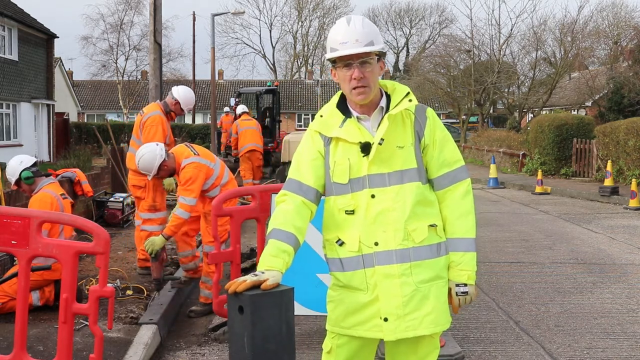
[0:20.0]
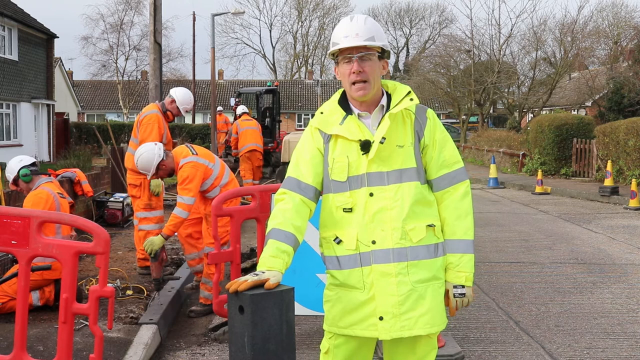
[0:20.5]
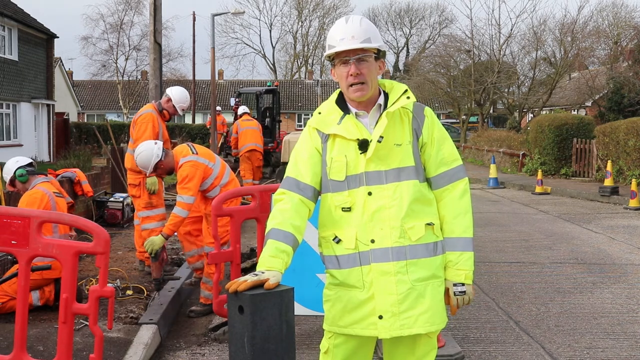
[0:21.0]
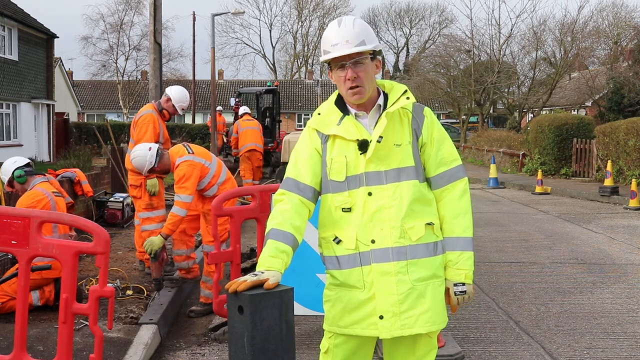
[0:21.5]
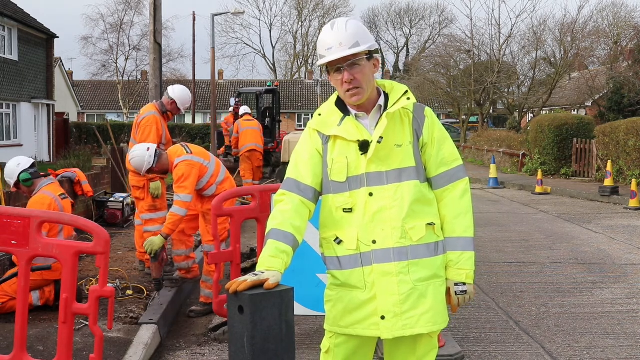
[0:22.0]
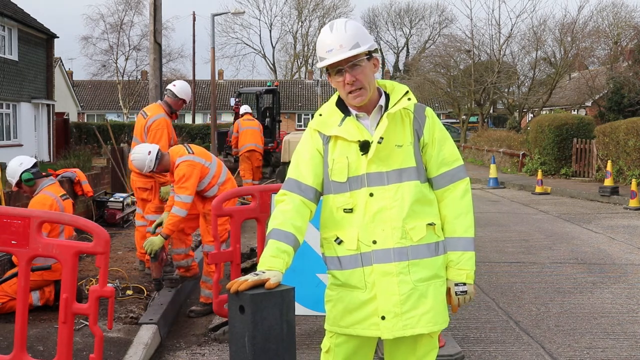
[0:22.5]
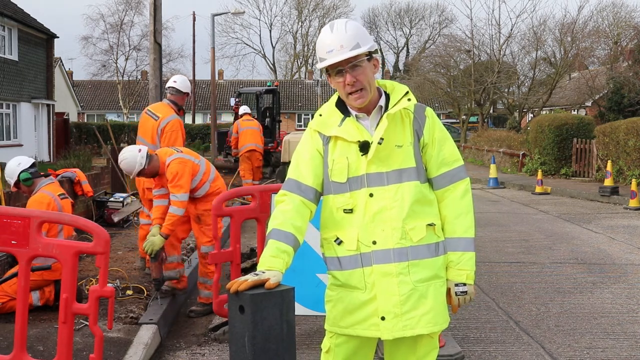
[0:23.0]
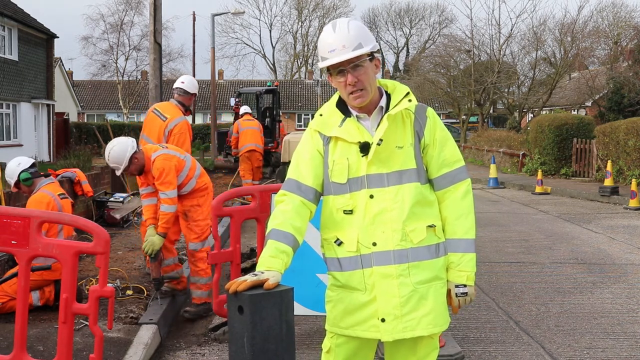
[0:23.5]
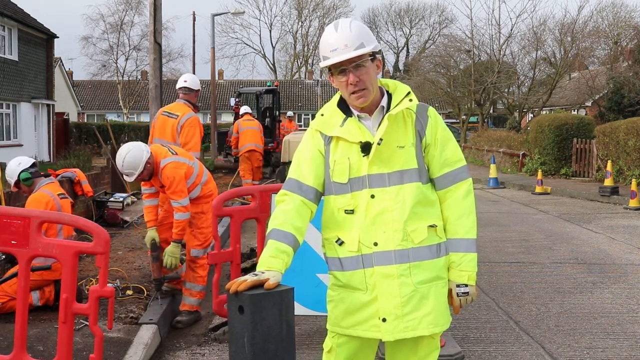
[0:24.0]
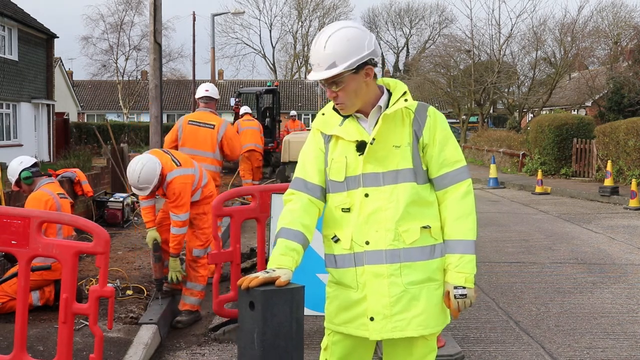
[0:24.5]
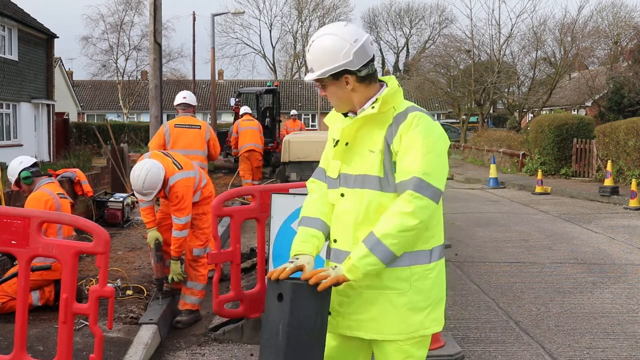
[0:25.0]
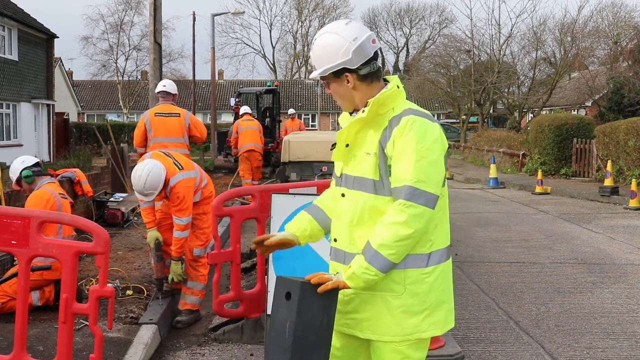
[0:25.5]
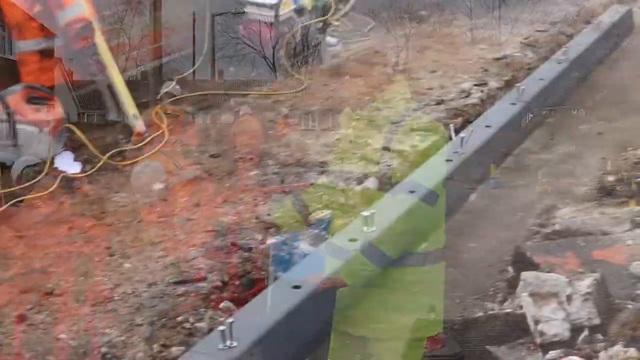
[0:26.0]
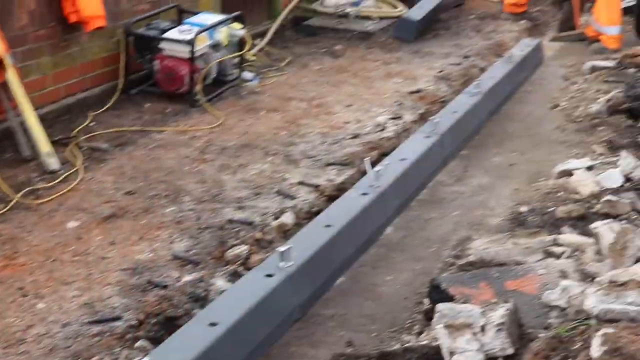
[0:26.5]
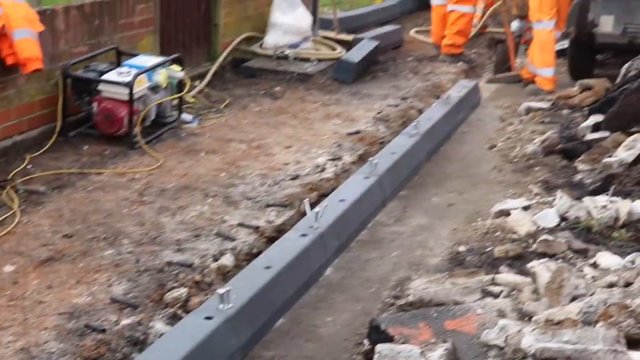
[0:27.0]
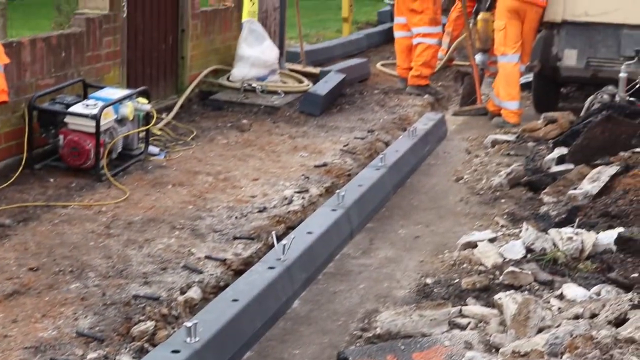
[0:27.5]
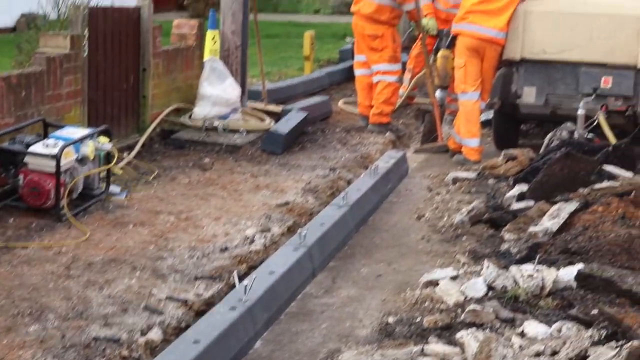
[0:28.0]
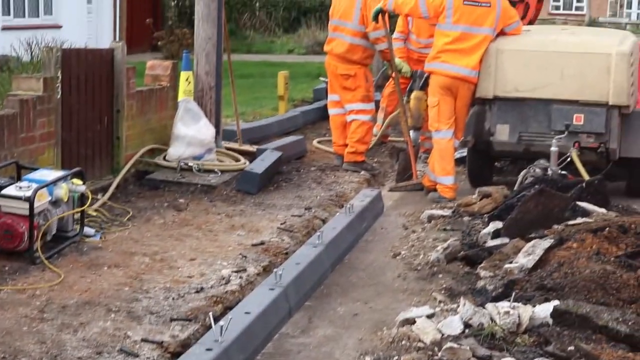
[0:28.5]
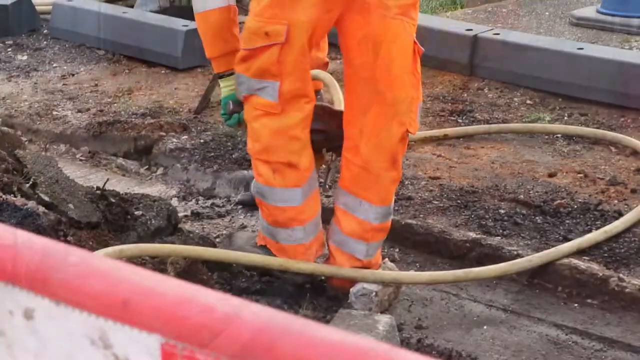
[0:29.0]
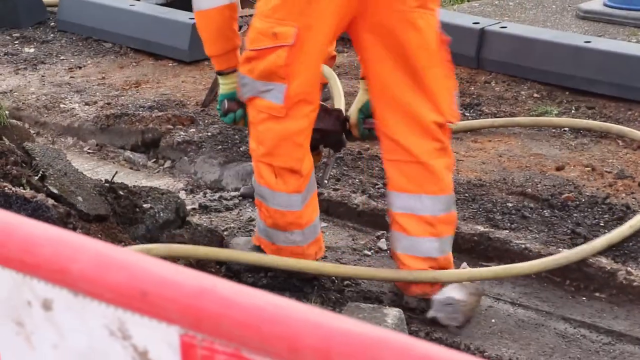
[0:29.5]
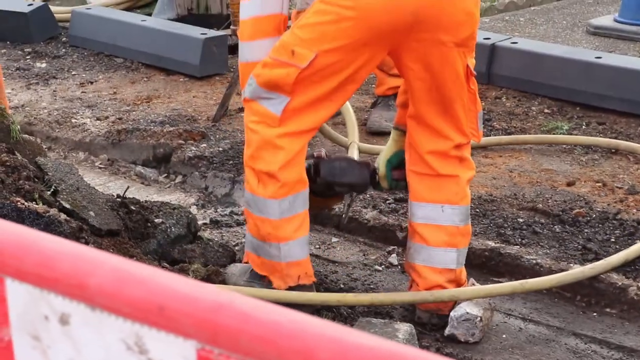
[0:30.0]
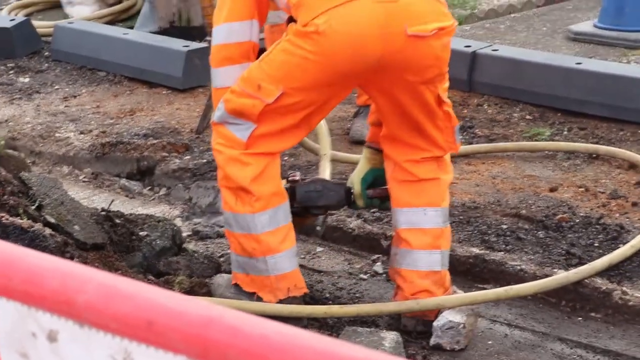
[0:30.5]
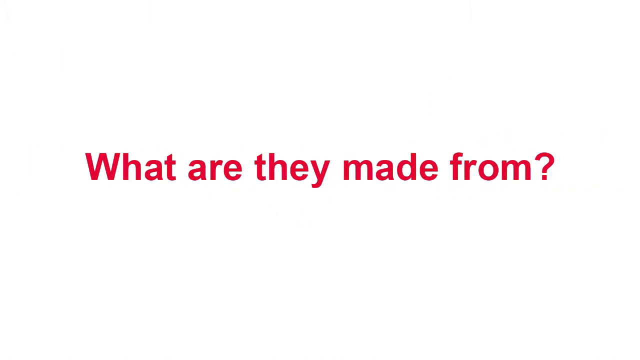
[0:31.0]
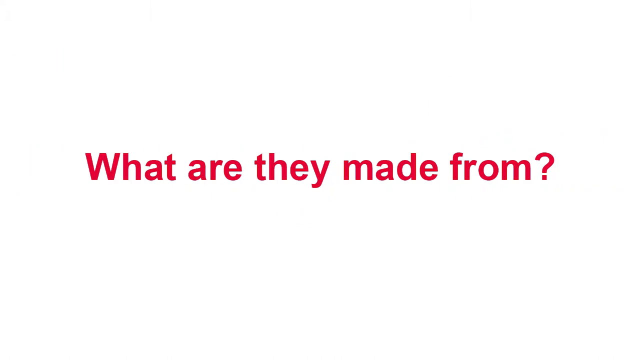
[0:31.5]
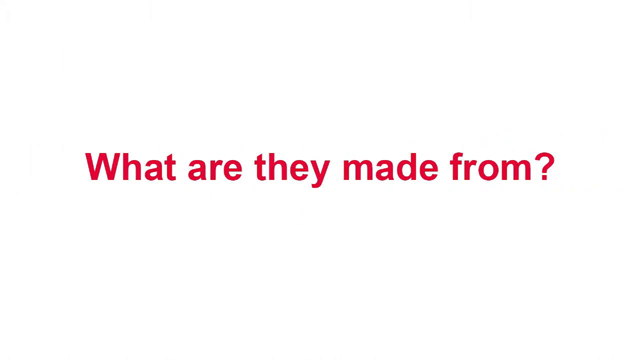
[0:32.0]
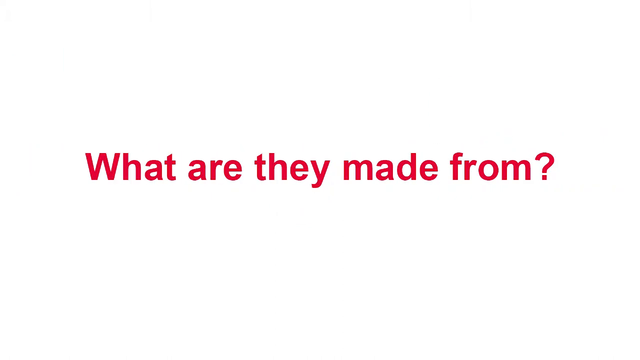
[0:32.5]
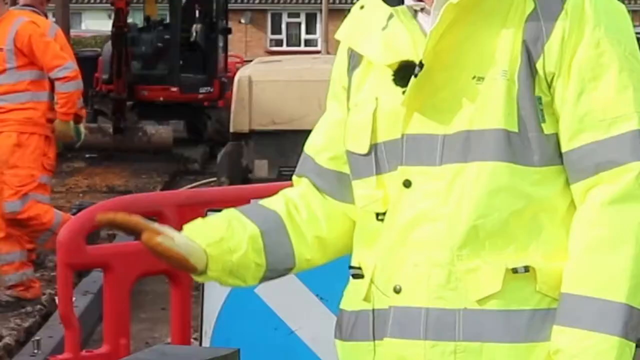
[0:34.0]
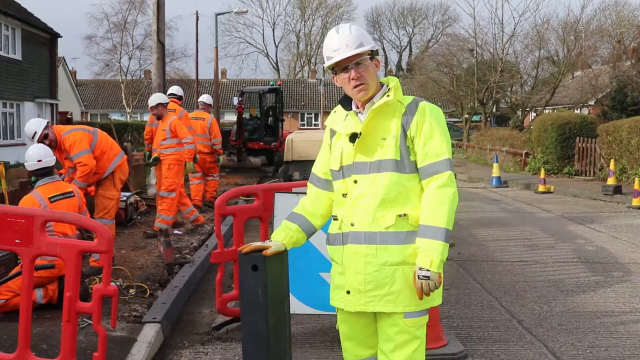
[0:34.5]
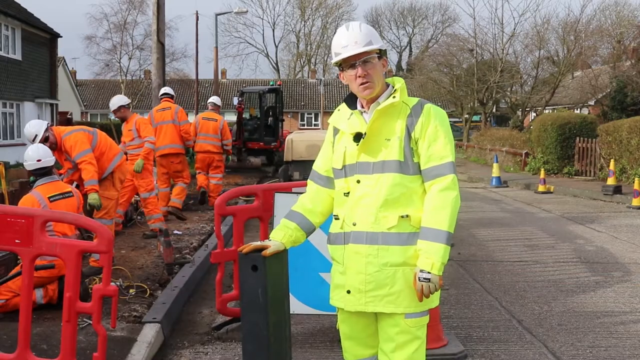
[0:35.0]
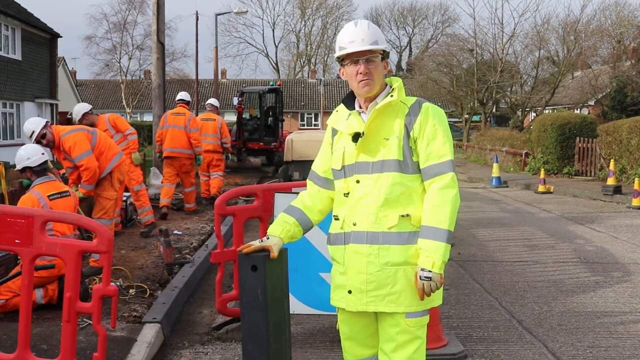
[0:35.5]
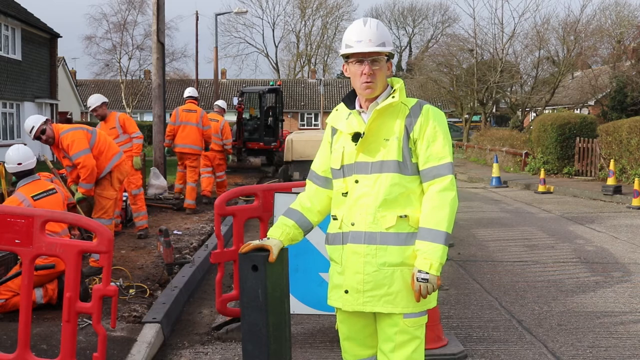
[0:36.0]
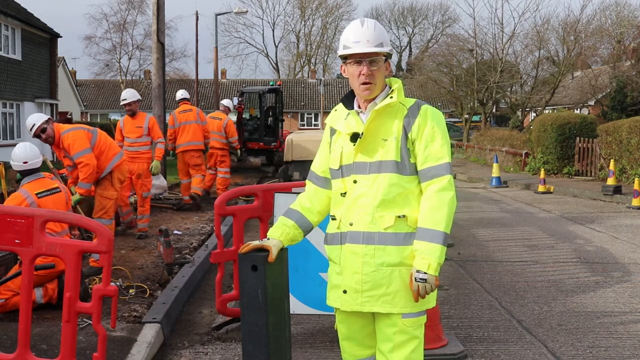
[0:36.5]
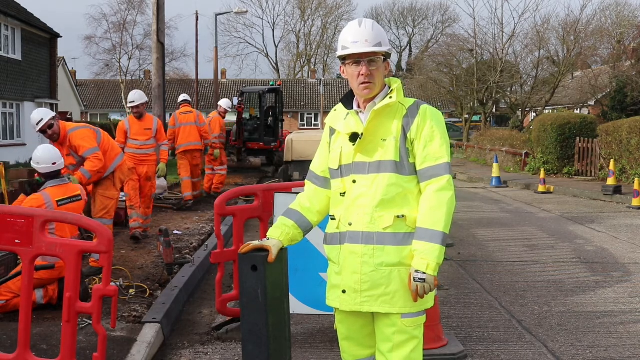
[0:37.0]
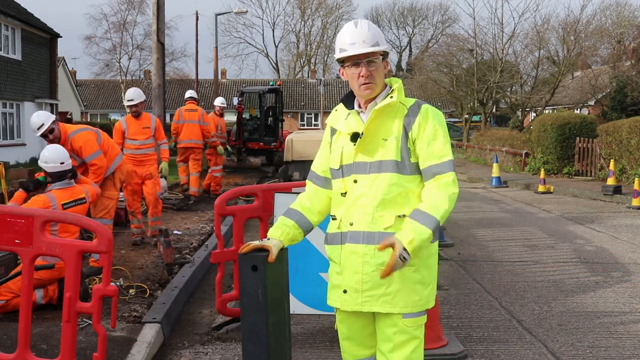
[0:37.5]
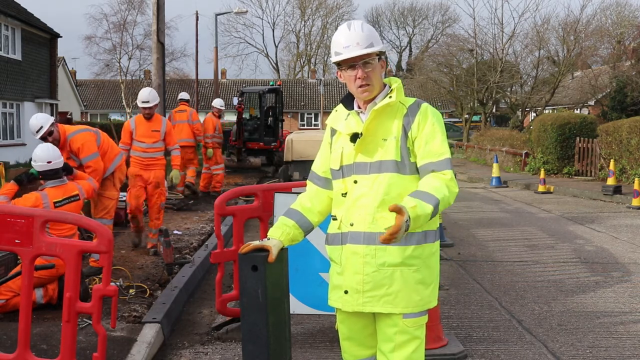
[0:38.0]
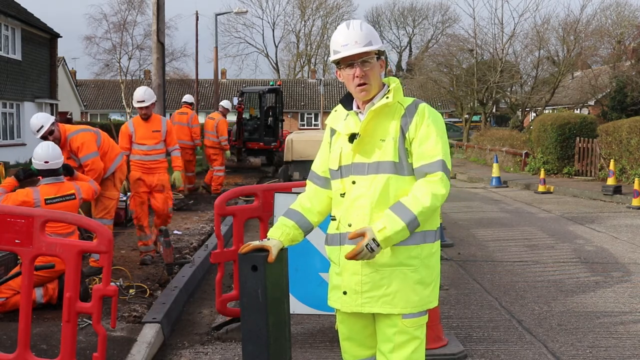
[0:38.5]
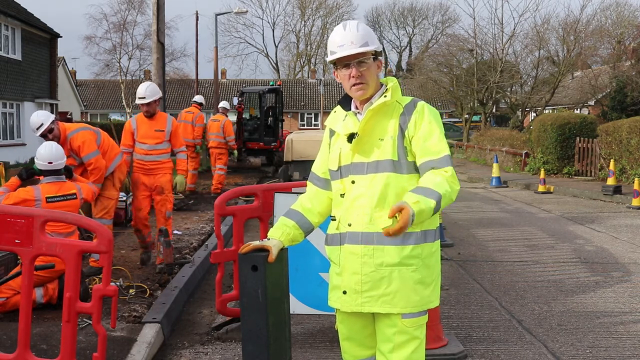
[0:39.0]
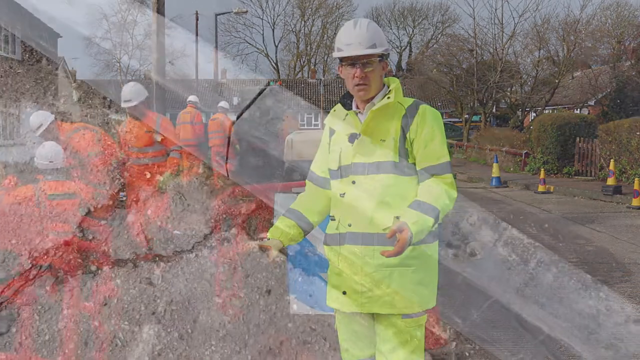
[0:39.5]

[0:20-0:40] The counselor has the long, rectangular, cinder-block-like item standing to his right and appears to be almost leaning on it with his hand. The workers seem to be working on a garden area or a sidewalk. To his left in the background are blue and yellow cones, about four of them. A close-up shows what the workers are doing: they appear to be installing beams into the sidewalk. A portable generator is there, and they use a tool to dig into the mud. Red text on a white background reads "what are they made from?" The shot returns to the counselor, who puts his hand on top of the structure and looks straight ahead as he gestures with his hands. He is wearing gloves.